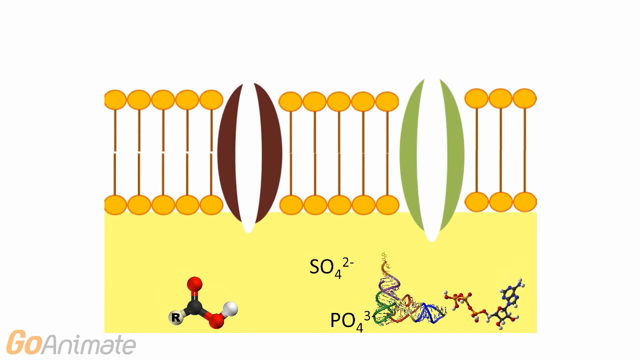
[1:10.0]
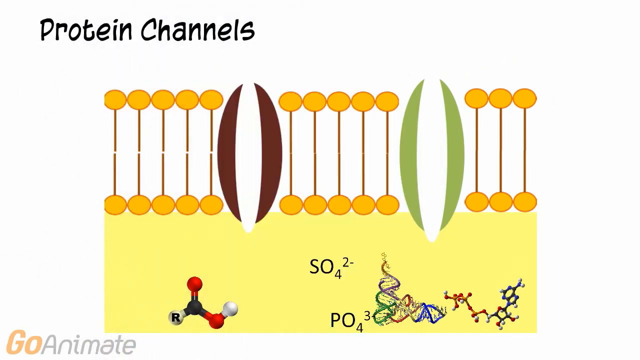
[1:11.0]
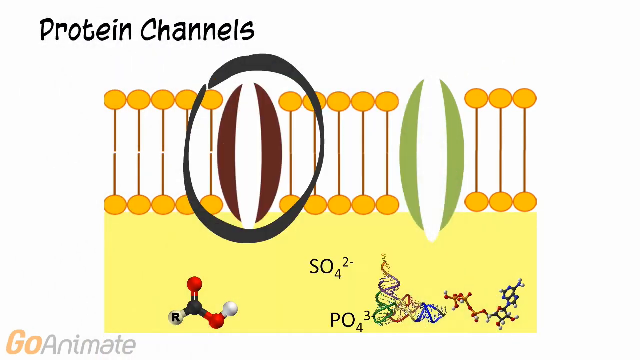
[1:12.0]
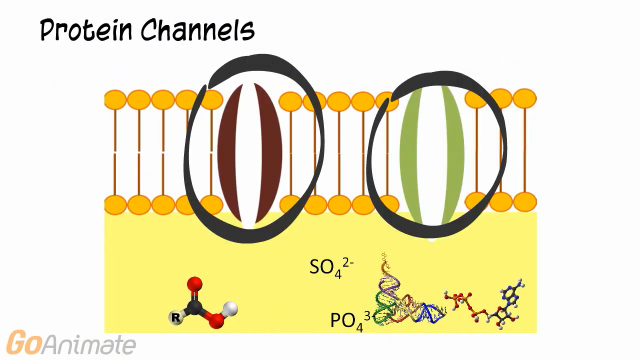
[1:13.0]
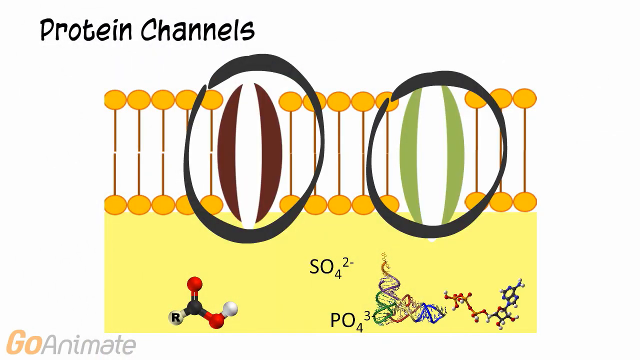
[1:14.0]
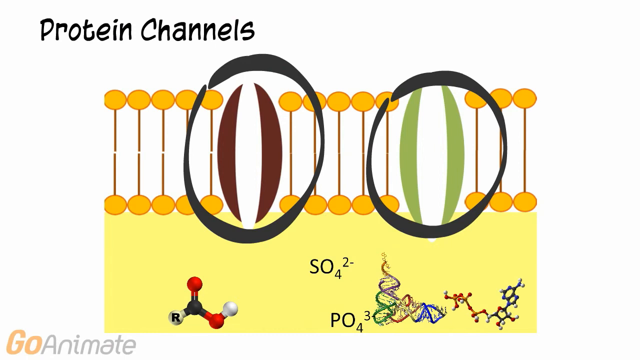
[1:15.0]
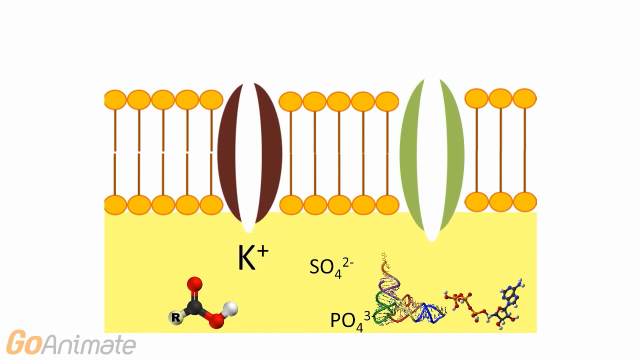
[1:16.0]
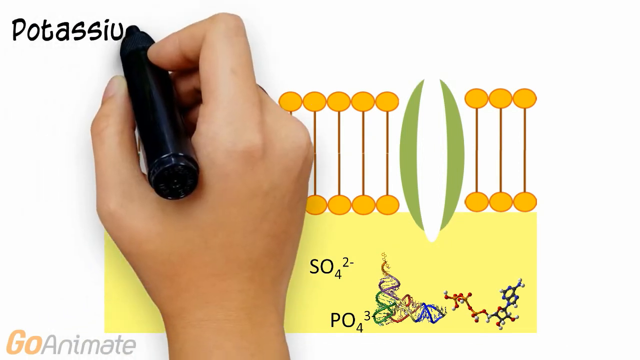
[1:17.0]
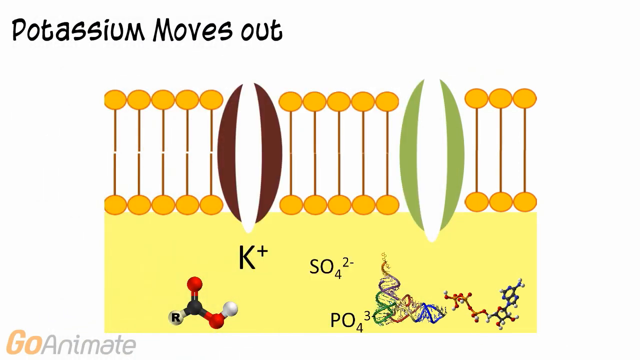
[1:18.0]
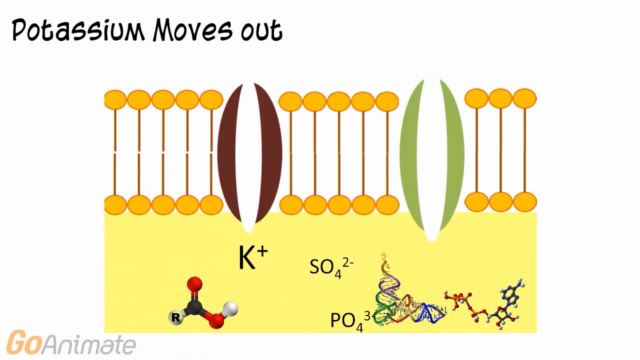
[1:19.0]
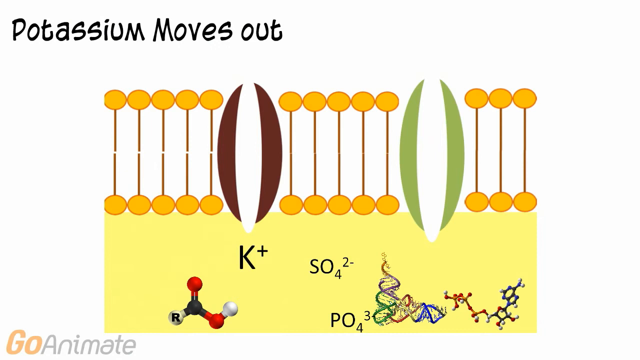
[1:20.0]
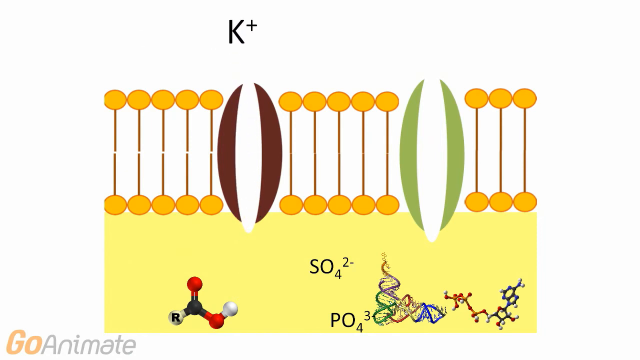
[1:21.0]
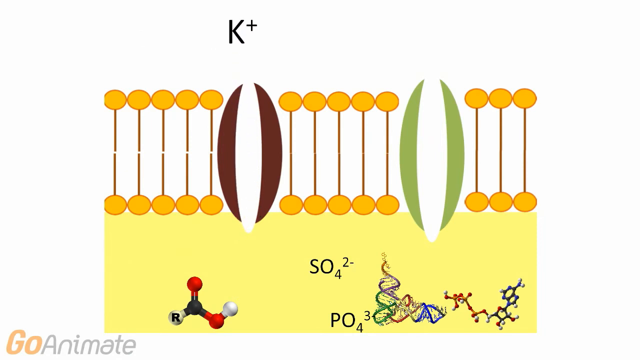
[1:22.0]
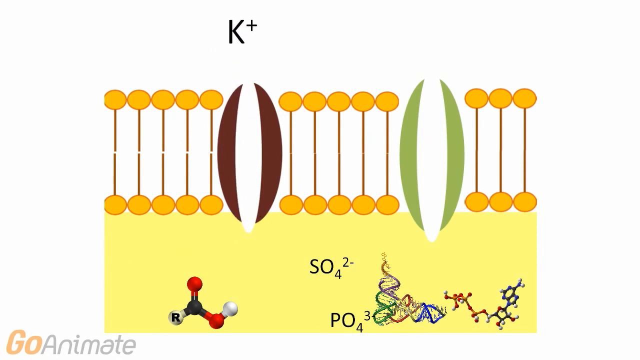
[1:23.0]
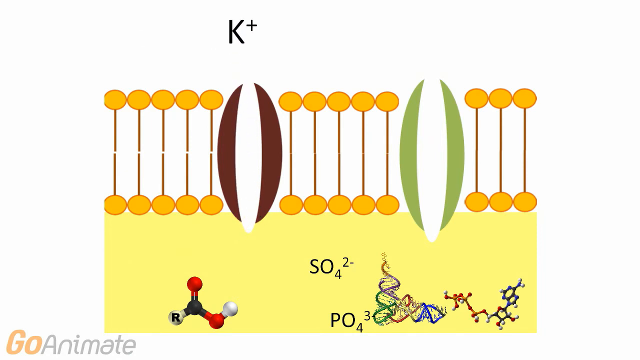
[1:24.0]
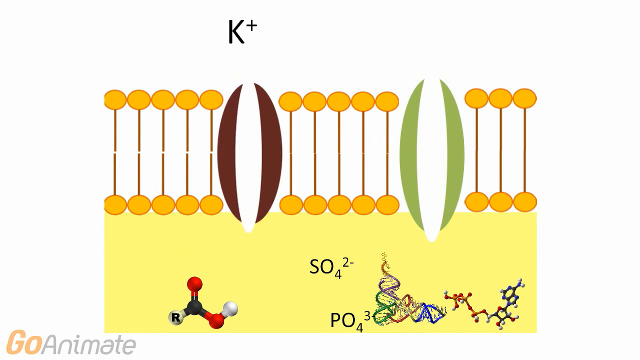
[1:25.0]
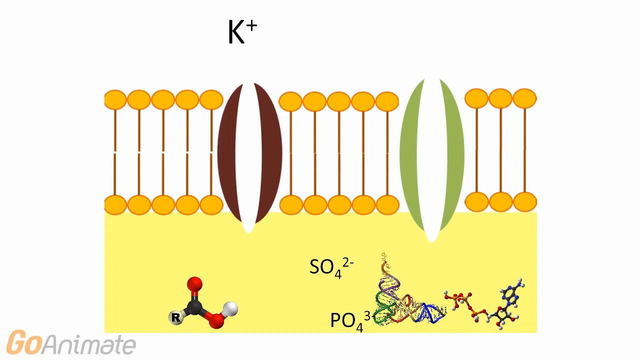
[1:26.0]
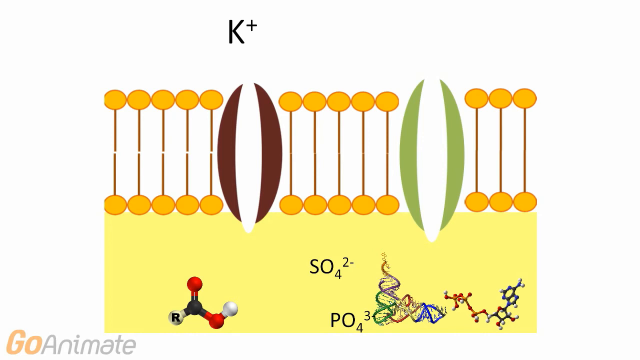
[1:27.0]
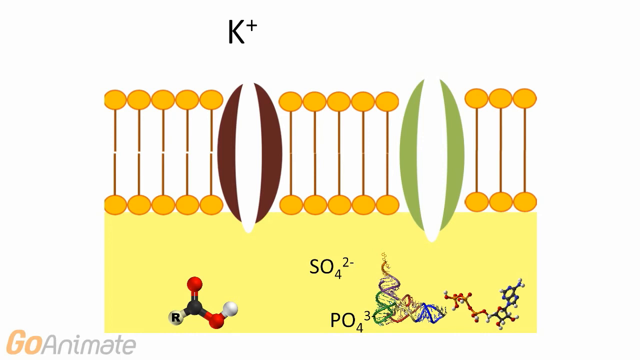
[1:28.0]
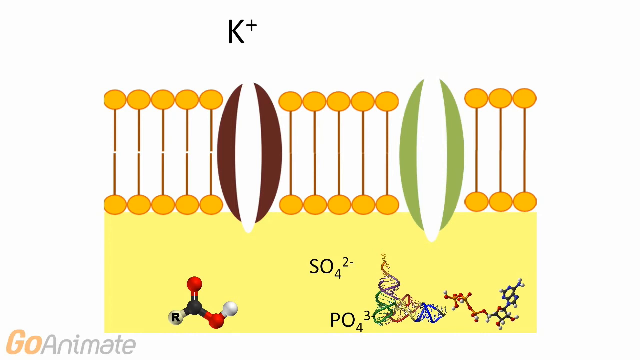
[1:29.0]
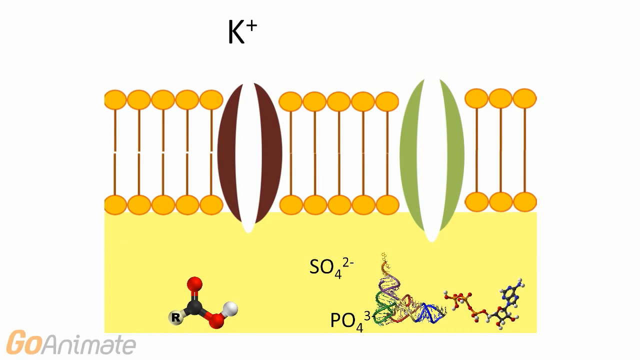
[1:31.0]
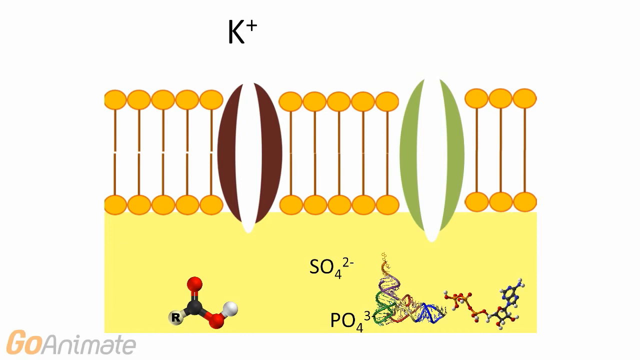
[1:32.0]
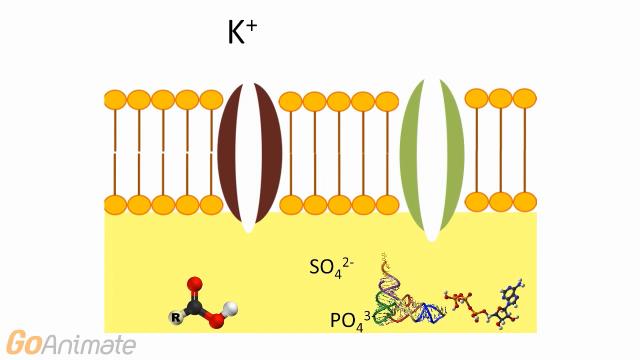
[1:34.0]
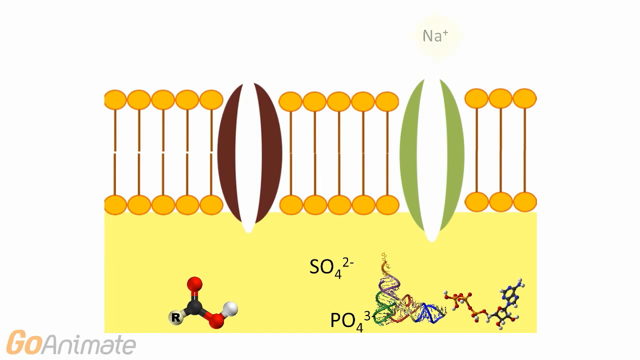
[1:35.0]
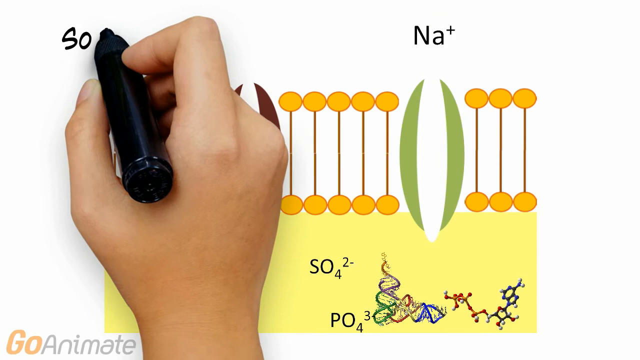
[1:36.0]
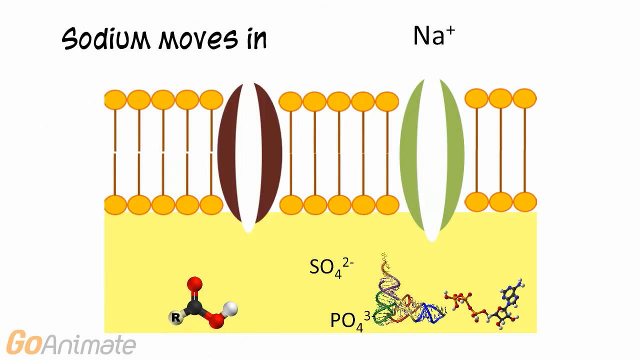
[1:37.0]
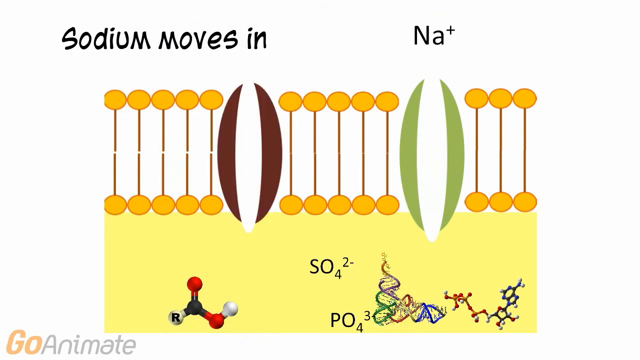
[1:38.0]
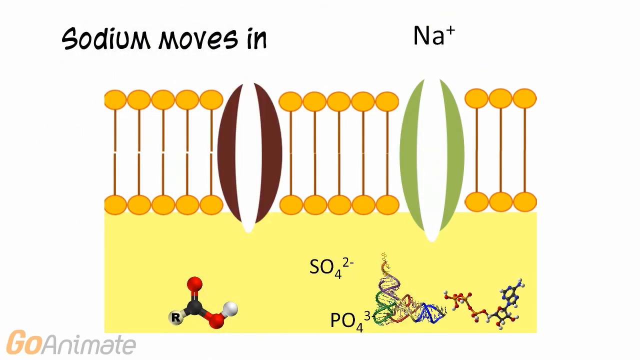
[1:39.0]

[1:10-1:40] The stylized neuron drawing shows a long yellow rectangle at the bottom, with two sets of five and one set of three vertically oriented lines with ovals on either end on top. Between the sets are two parentheses-shaped objects, the left one with brown sides and the right one with green sides. Across the bottom of the yellow area are a representation of an atom labeled R, the chemical formulas SO4 negative 2 and PO4 to the third, a drawing of a double helix, and a drawing of several atoms strung together. The hand appears and writes "protein channels" above the neuron, then circles the parentheses-shaped objects with the black pen. A "K+" appears below the brown object, with text above reading "potassium moves out," and the K moves up through the center of the parentheses to the outside of the neuron. The hand then writes "sodium moves in," an "Na+" symbol appears at the top above the green object, and it comes down through the hole in the green parentheses.